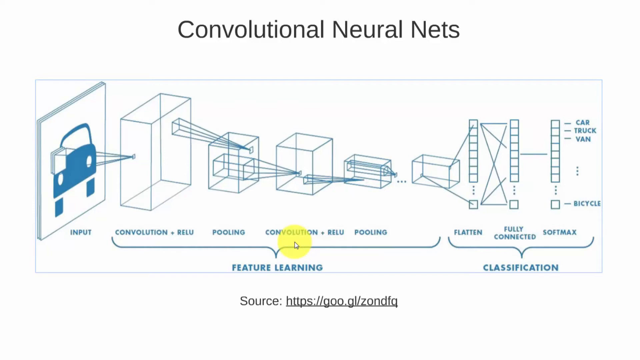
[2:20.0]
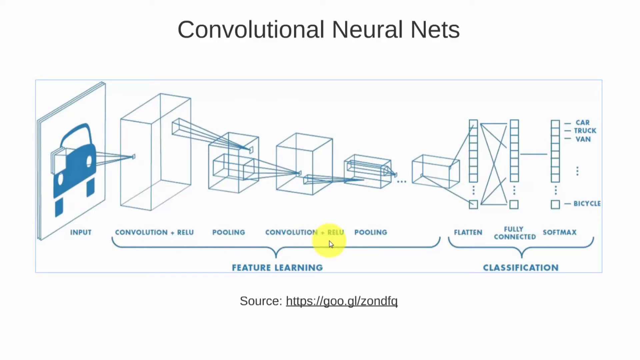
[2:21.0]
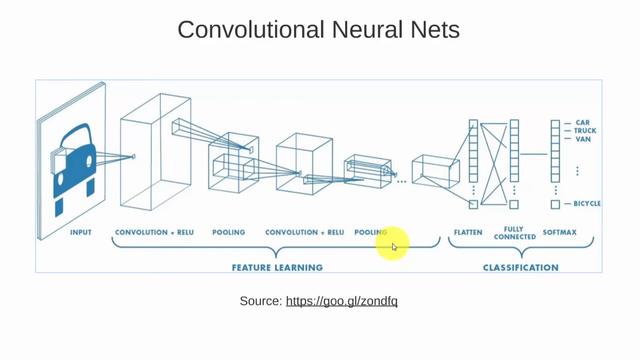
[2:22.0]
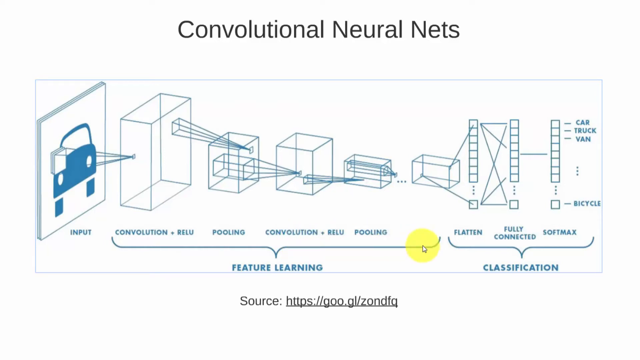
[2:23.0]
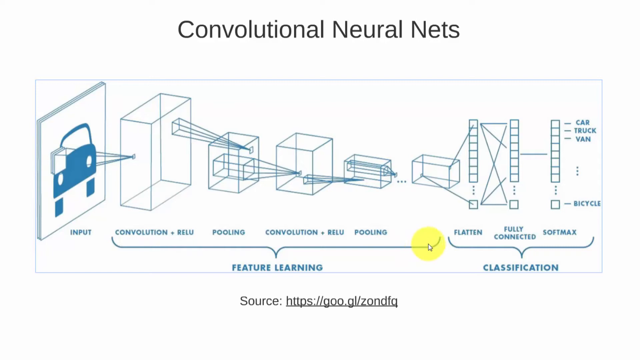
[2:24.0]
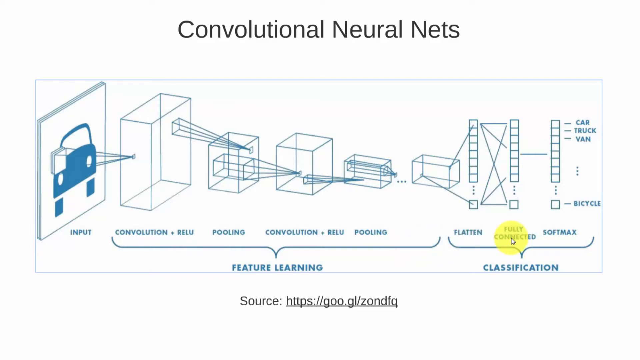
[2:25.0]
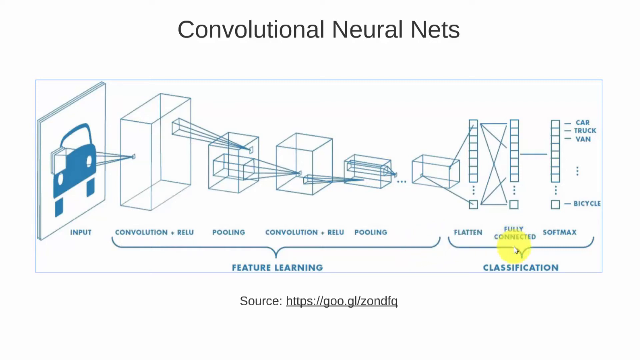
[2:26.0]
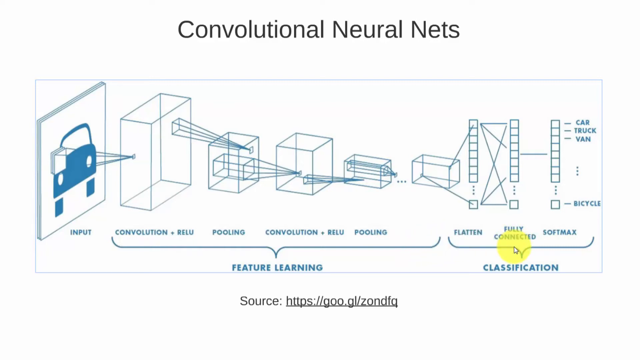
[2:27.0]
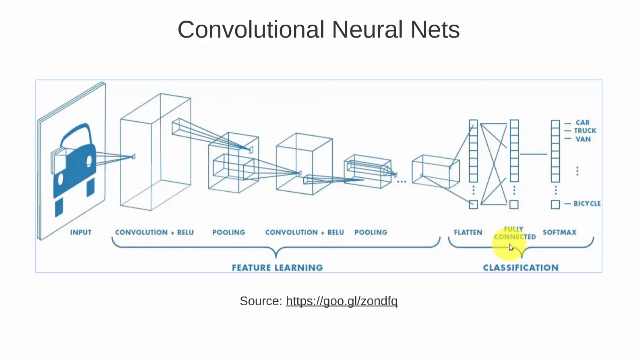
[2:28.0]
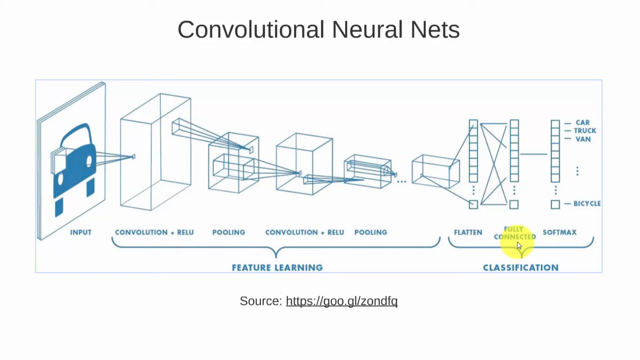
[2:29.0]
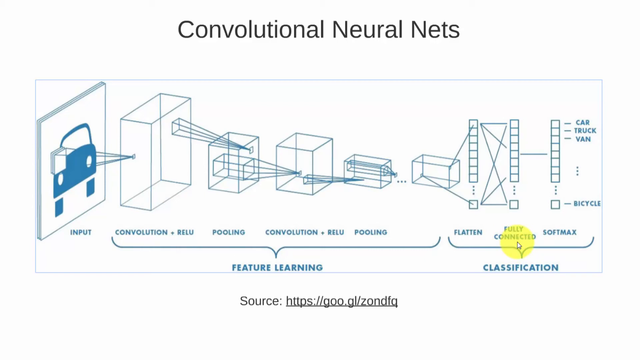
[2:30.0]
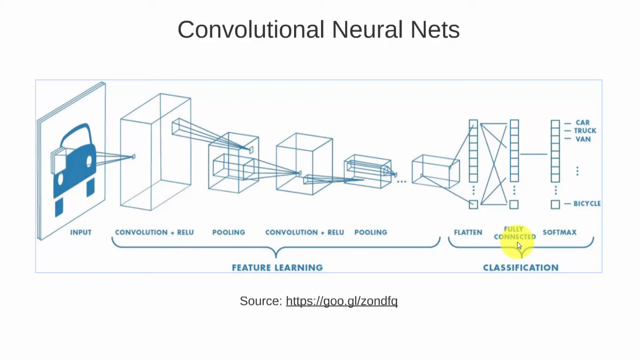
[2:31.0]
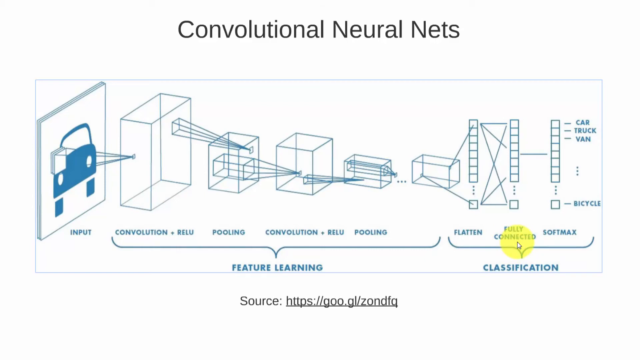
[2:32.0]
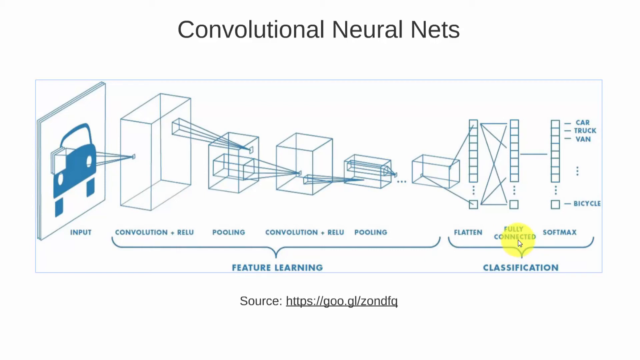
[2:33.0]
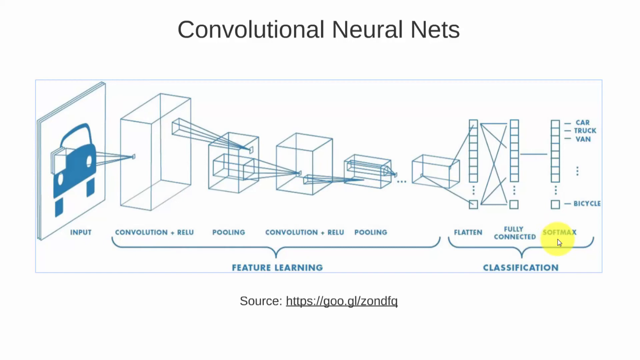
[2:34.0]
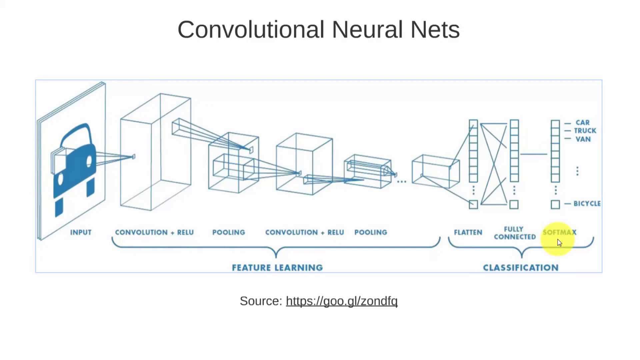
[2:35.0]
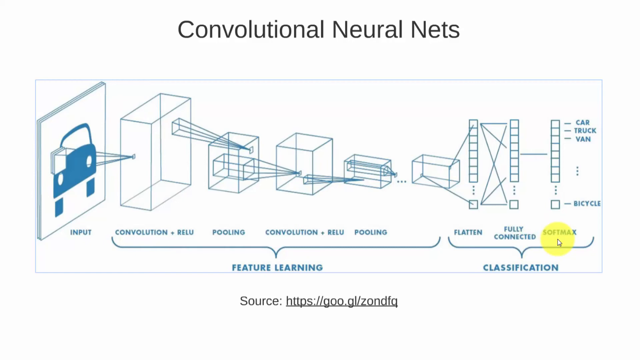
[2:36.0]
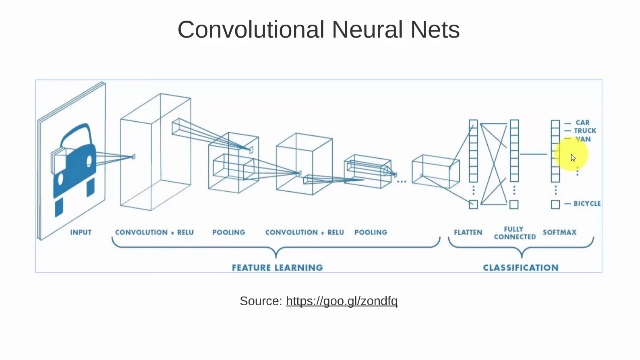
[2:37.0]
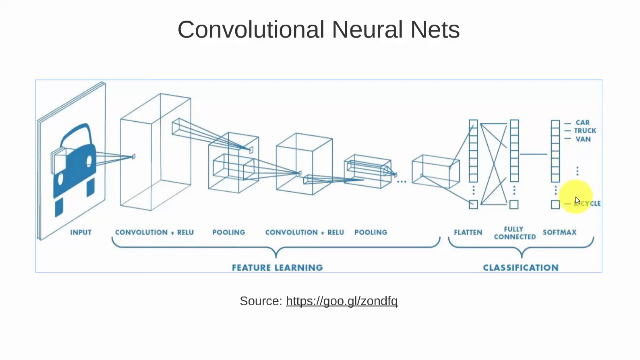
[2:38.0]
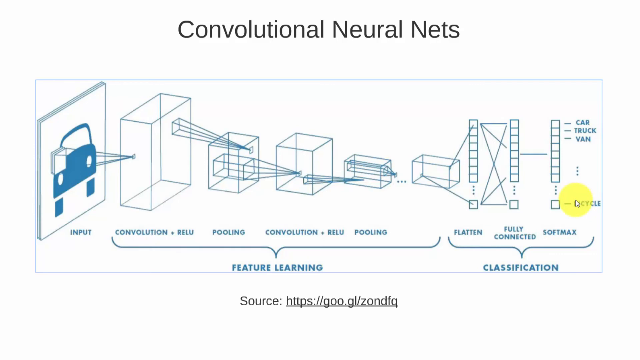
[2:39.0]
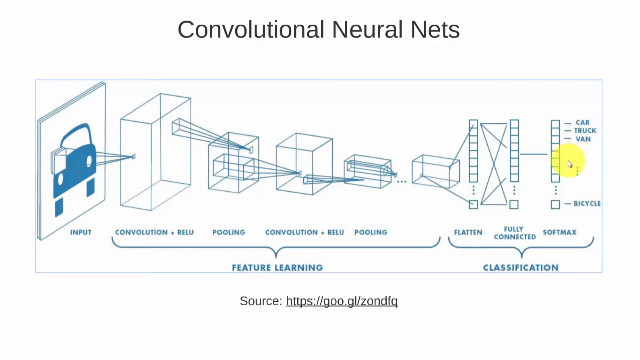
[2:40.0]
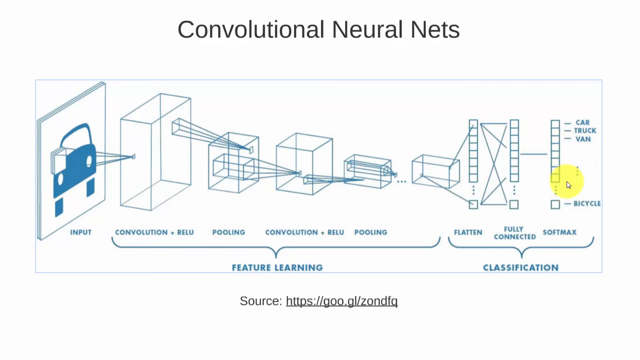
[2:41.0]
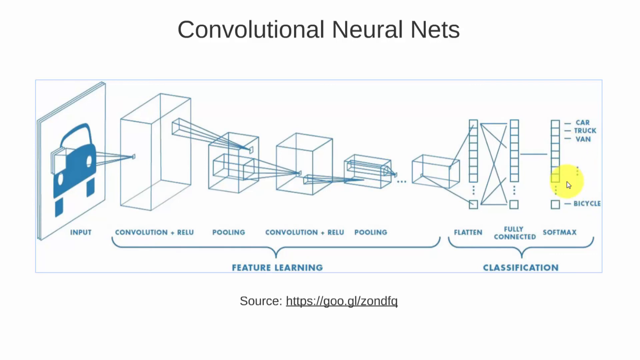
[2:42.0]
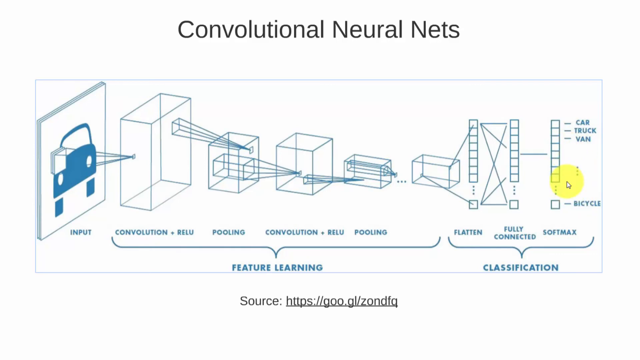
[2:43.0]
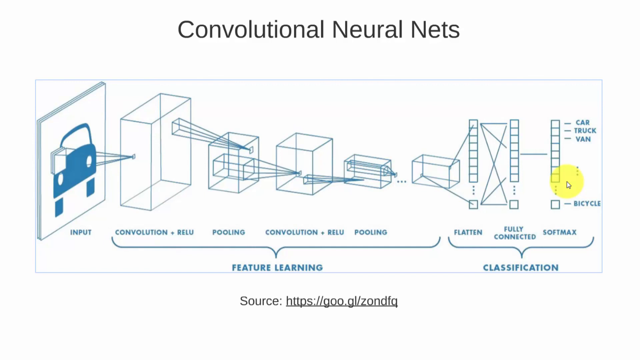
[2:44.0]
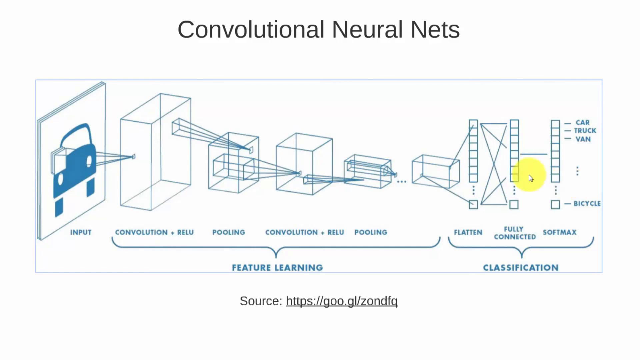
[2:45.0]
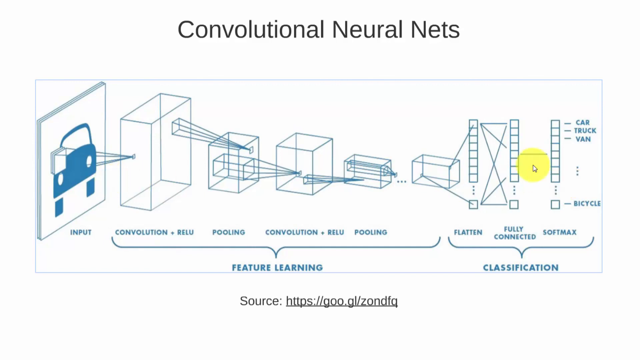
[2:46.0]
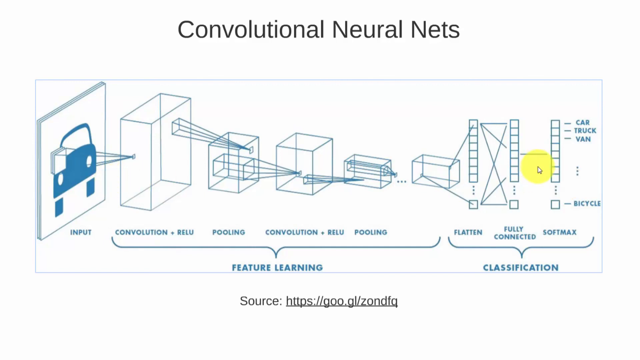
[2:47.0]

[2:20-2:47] The person continues to look at the slide, an image of a graph or some type of diagram apparently about how cars use a camera to recognize what is in front of them with convolutional neural nets. Sources are provided at the bottom of the screen. Triangles on each of the squares connect the squares to each other; the triangles are in different portions of the squares, hitting different locations on the square in front of them.